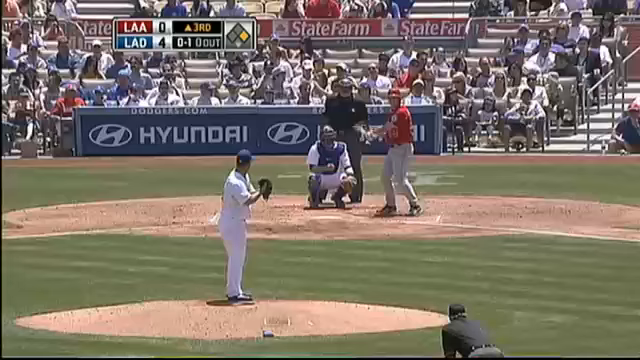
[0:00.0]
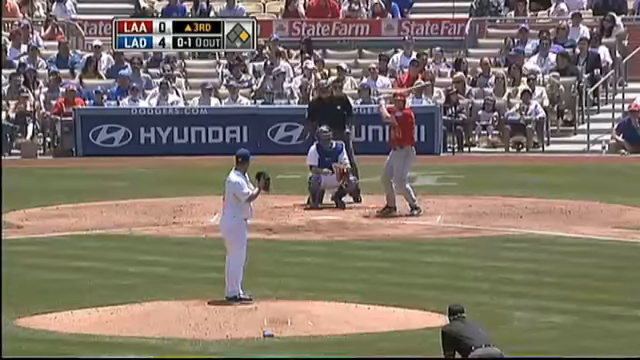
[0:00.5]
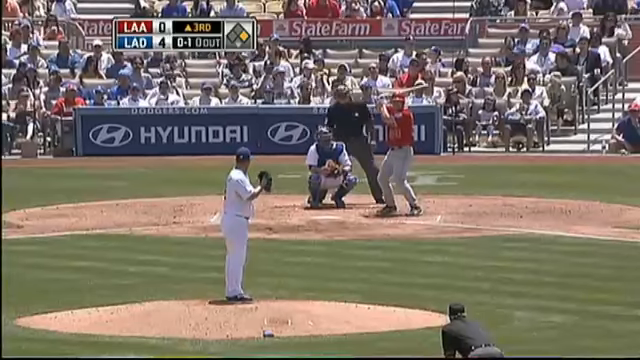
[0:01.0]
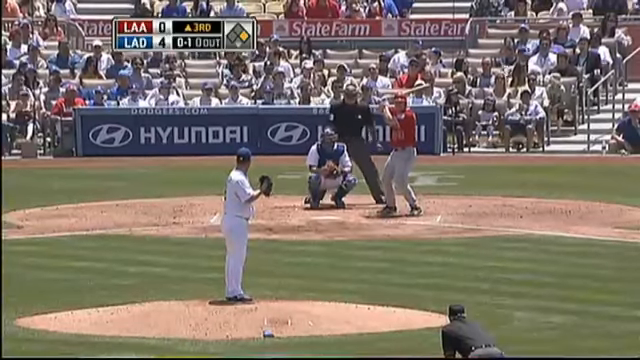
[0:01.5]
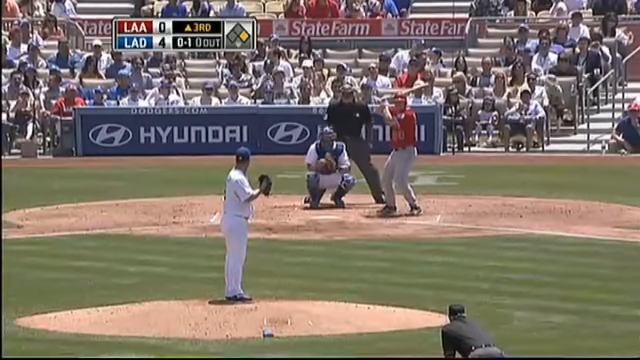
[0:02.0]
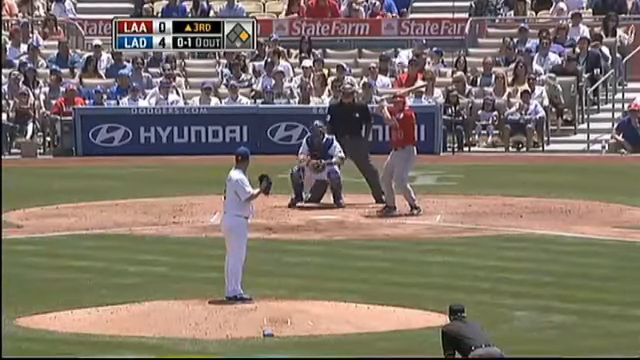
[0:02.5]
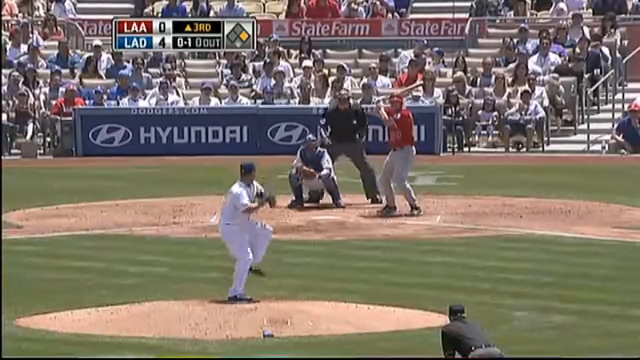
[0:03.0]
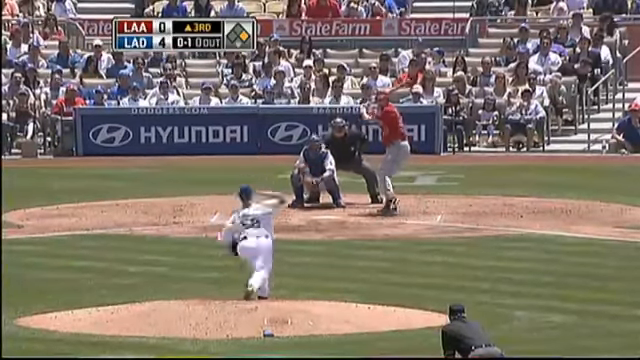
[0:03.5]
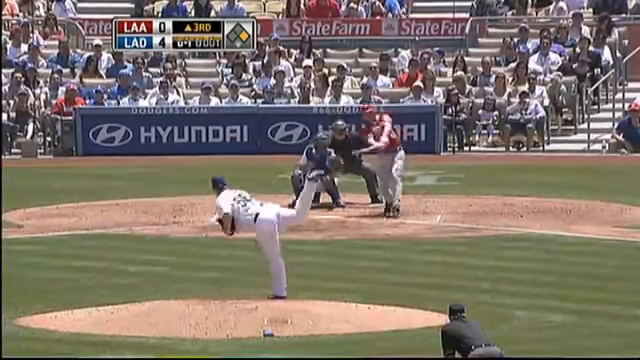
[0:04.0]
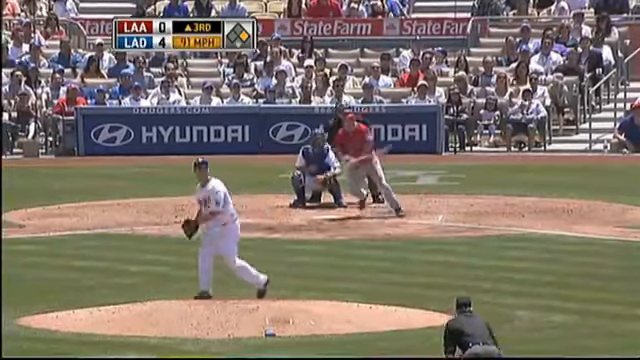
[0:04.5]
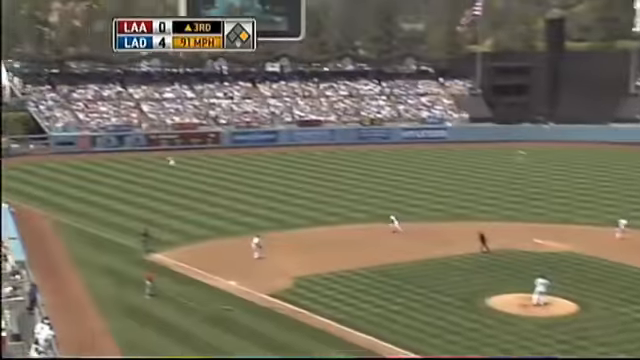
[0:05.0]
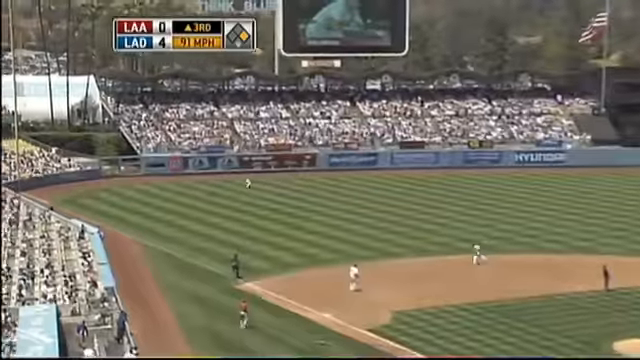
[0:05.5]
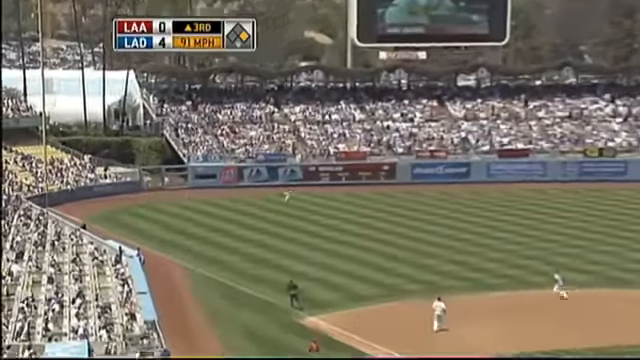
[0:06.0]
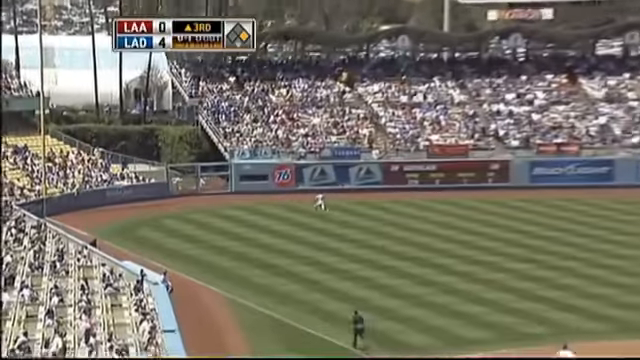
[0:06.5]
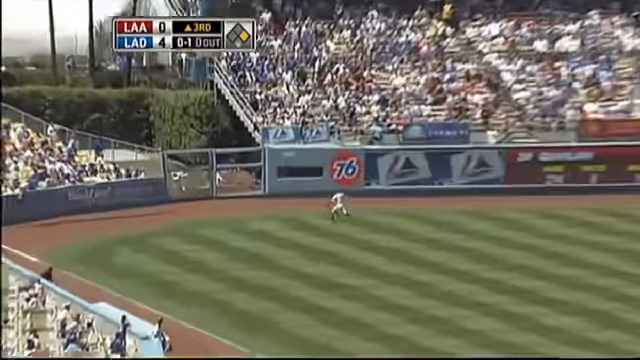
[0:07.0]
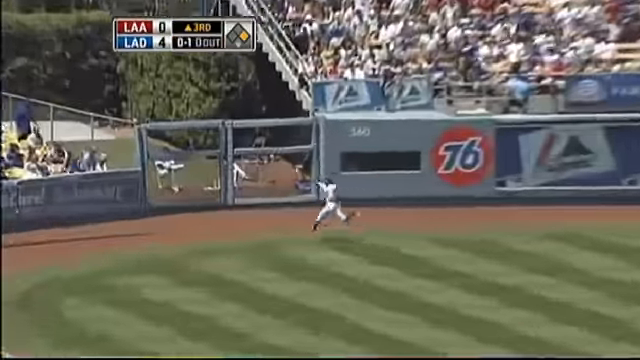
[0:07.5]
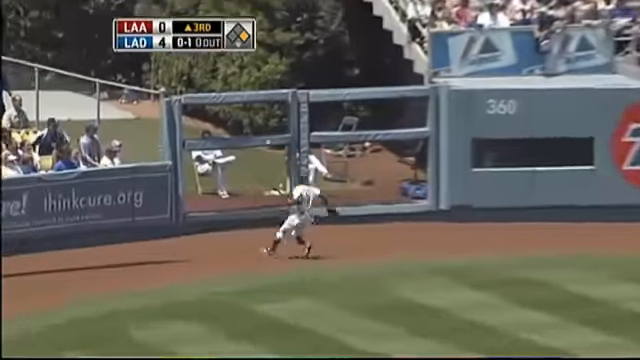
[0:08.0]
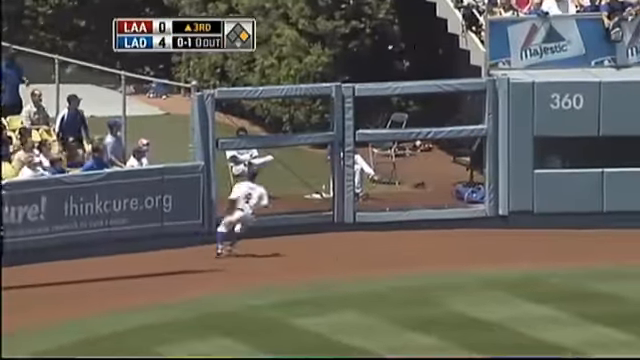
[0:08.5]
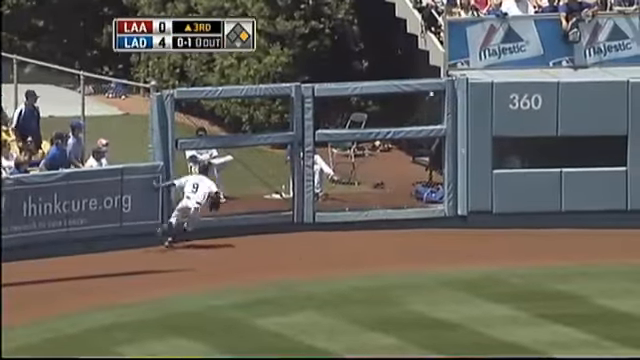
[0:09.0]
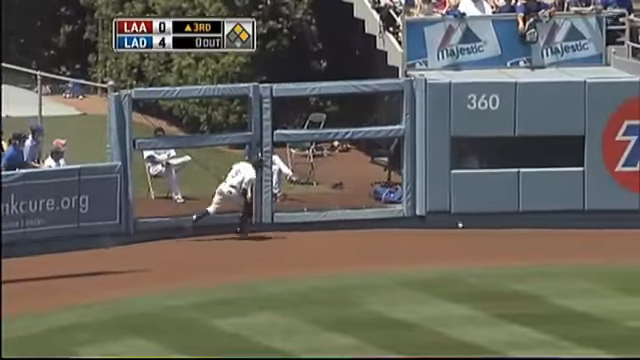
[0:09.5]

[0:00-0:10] A baseball field is shown. A pitcher wears an all-white uniform with a blue hat and a blue glove, his hand visible inside the glove. A player at the plate wears a Los Angeles Angels uniform: a red shirt, light gray pants and a red batting helmet. The pitcher throws the ball toward a catcher in a white uniform with a blue chest protector. Behind the catcher is an umpire wearing a black shirt, gray pants and a face protector. The Angels player hits a deep fly ball to left field that goes over the outfielder's head and bounces off the ground.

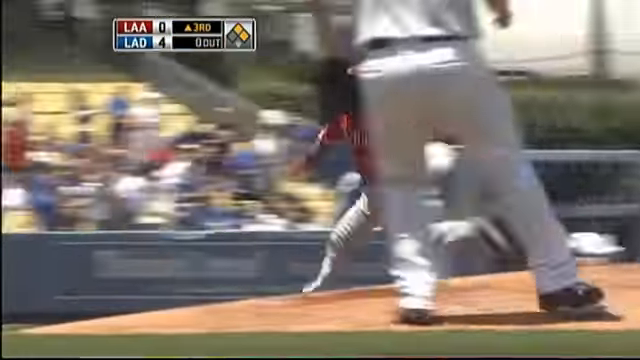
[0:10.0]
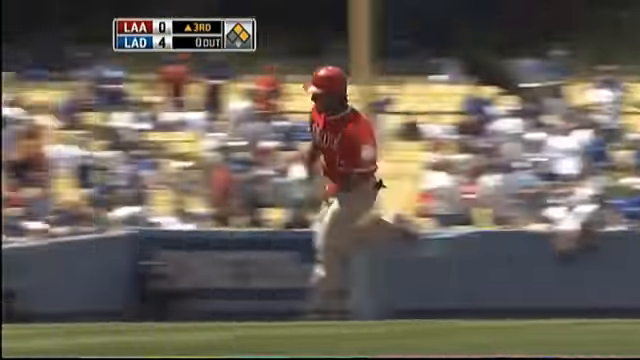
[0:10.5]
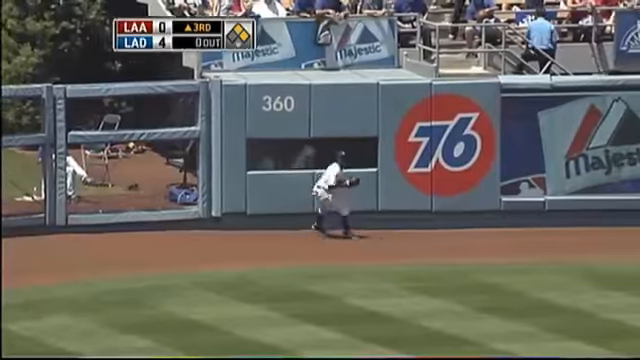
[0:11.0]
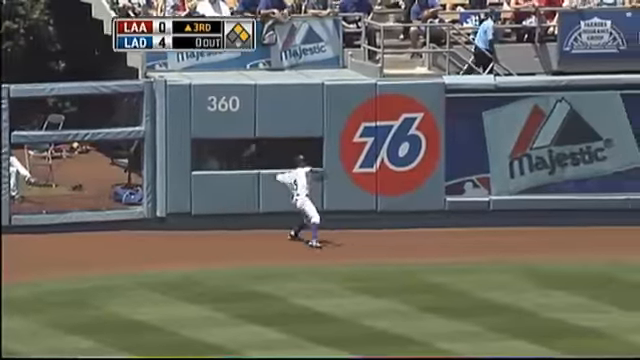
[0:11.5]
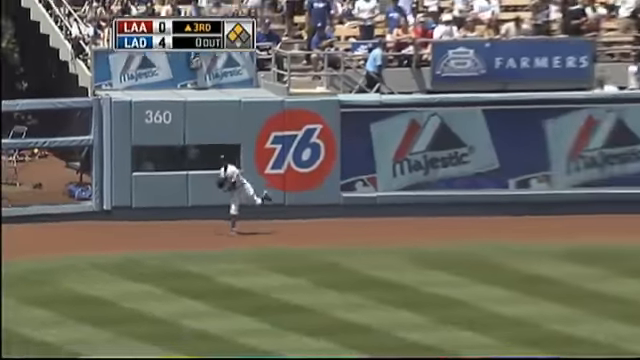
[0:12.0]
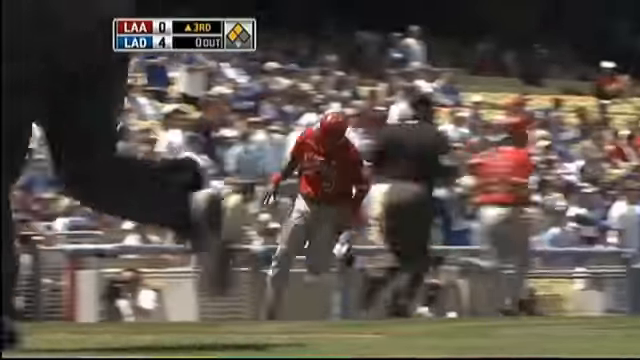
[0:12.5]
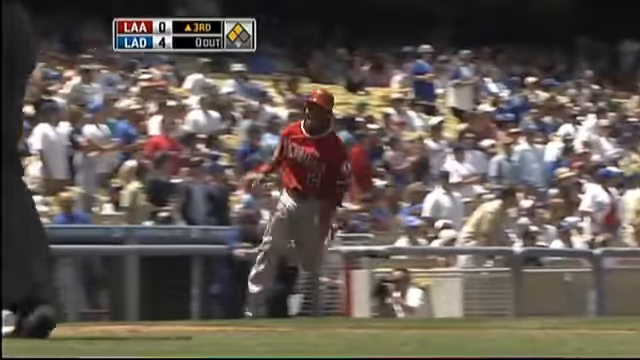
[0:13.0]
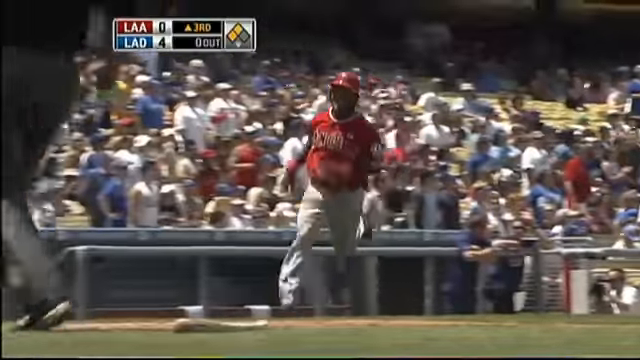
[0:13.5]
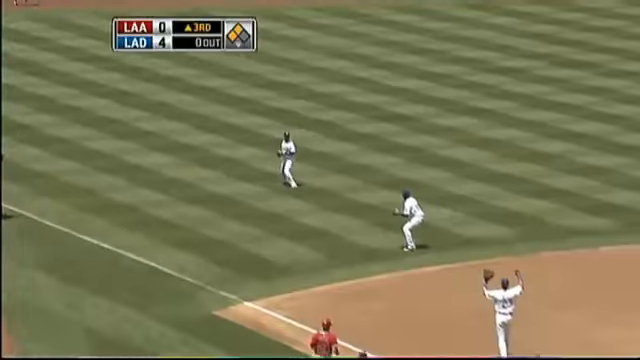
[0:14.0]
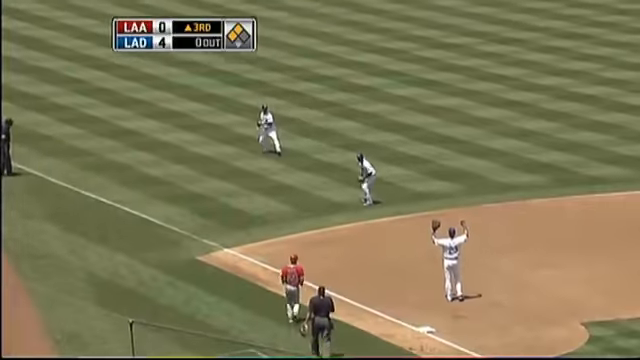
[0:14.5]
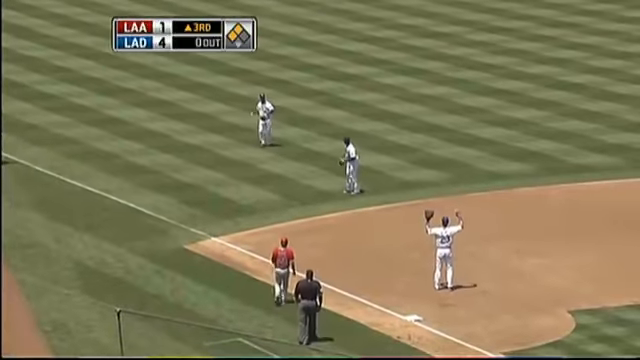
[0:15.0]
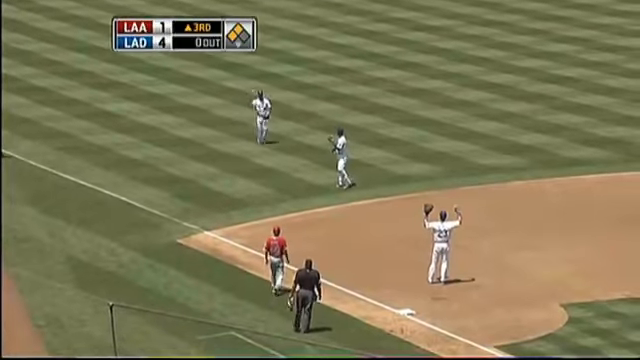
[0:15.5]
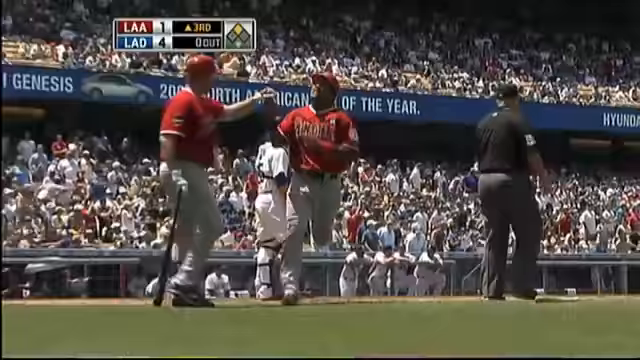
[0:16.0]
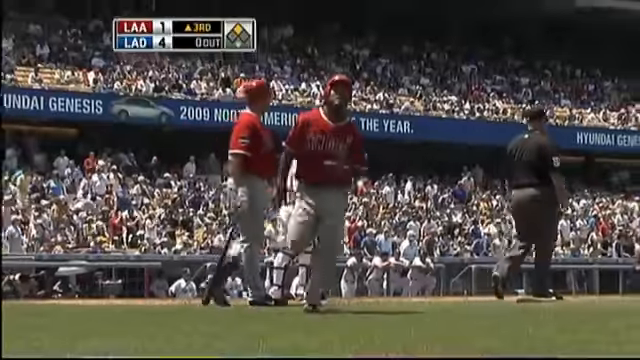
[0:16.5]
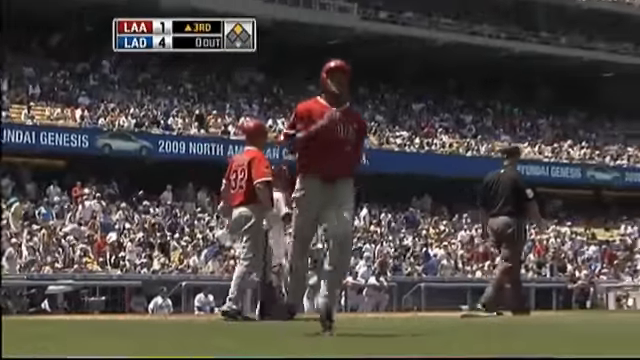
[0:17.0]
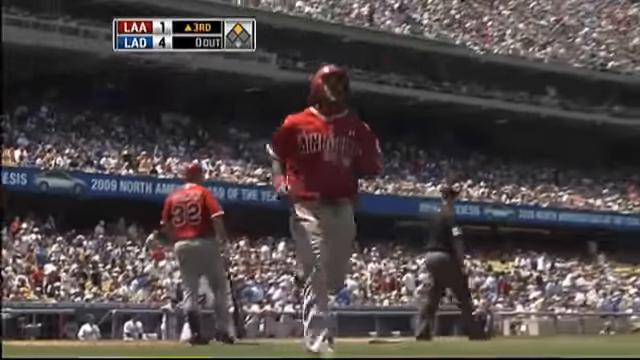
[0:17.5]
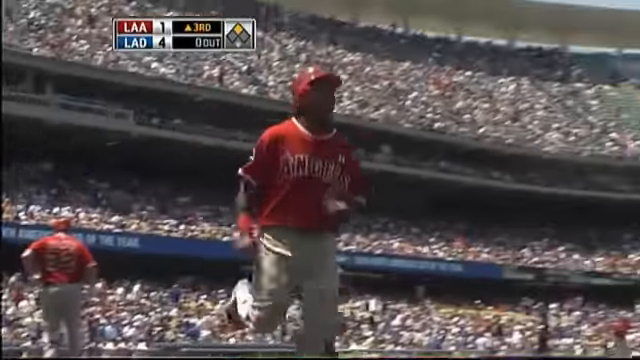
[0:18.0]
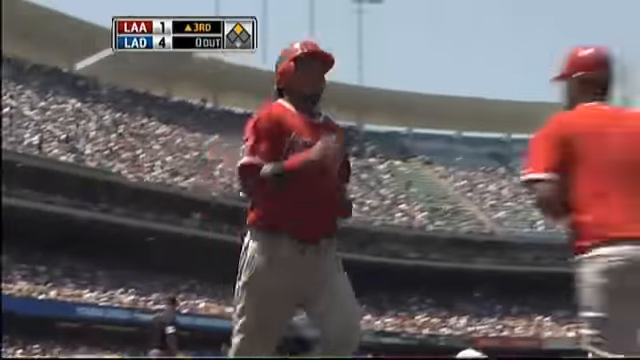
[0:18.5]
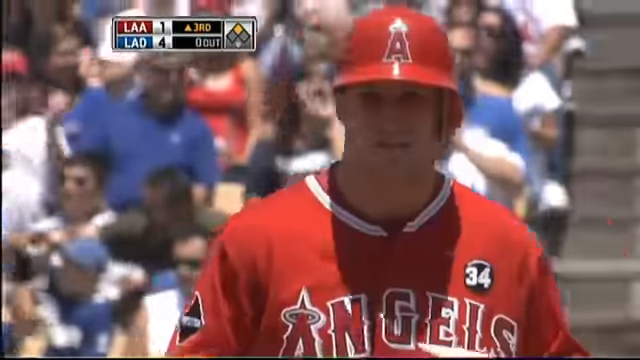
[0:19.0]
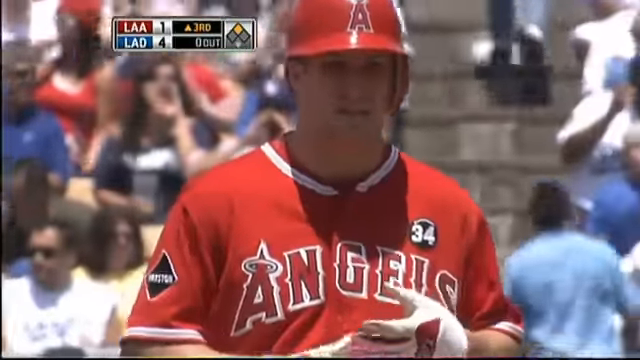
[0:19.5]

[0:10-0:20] The Los Angeles Angels player runs to first base, and he is seen rounding third base and heading home. Lots of people fill the stands. The outfielder, in an all-white uniform, grabs the ball in left field and throws it to the cutoff man, likely the shortstop, who also wears an all-white uniform. The game is the Los Angeles Dodgers versus the Los Angeles Angels. An Angels player in a red uniform with gray pants rounds third base and scores a run.